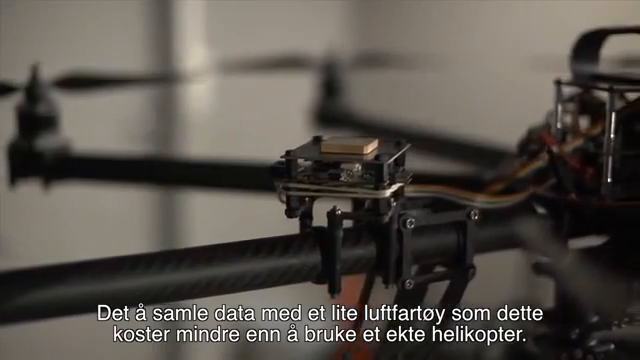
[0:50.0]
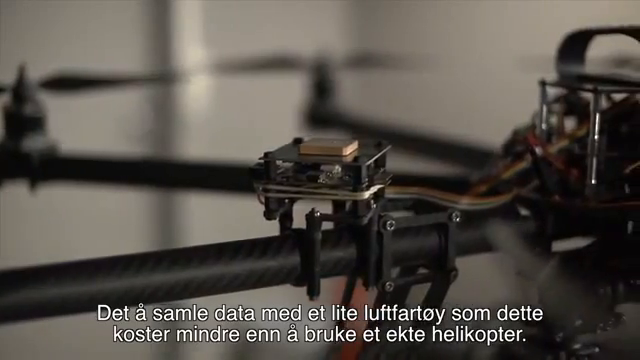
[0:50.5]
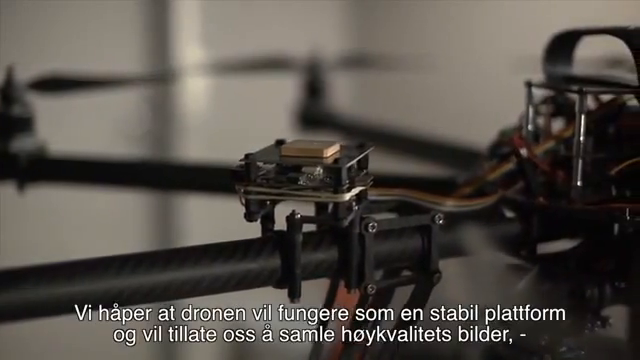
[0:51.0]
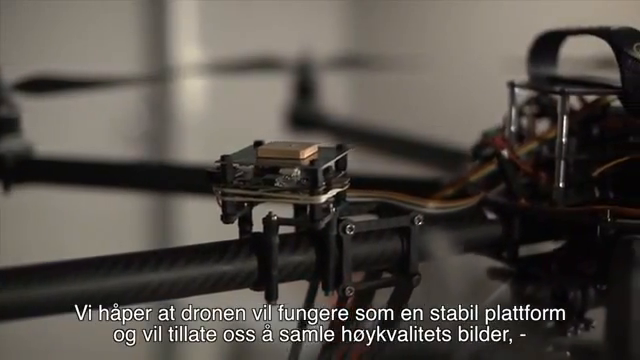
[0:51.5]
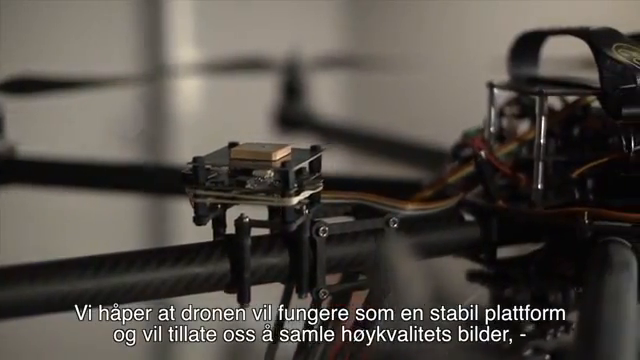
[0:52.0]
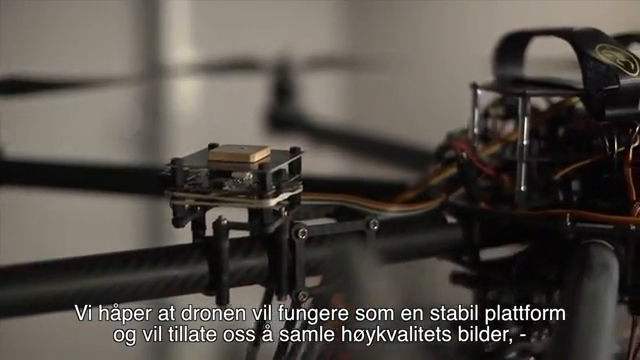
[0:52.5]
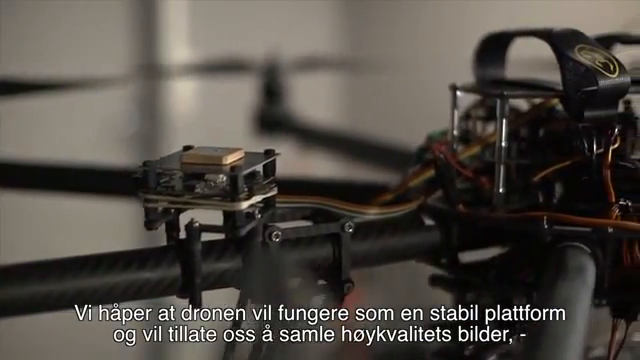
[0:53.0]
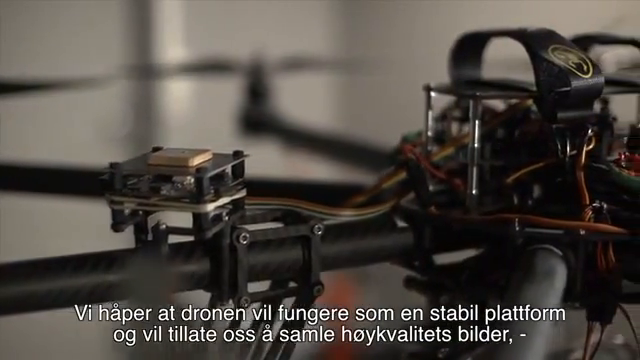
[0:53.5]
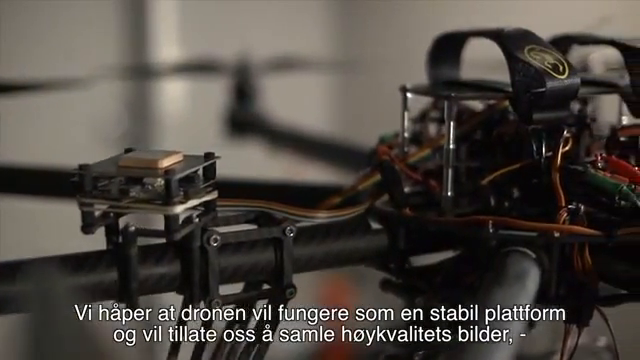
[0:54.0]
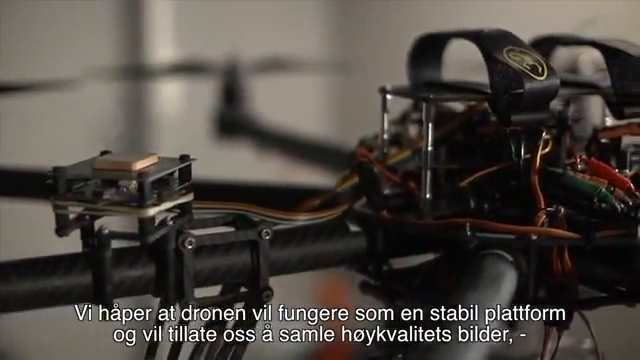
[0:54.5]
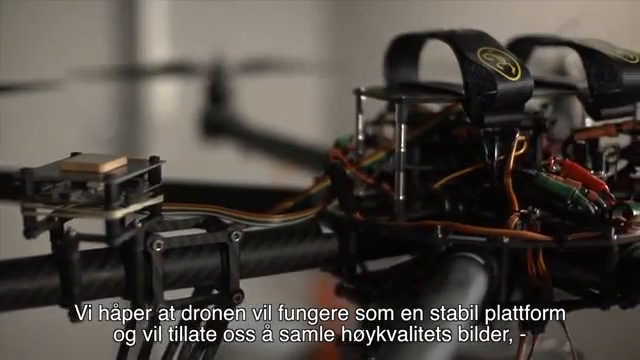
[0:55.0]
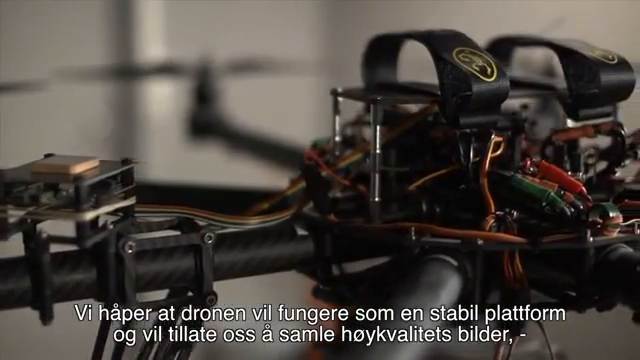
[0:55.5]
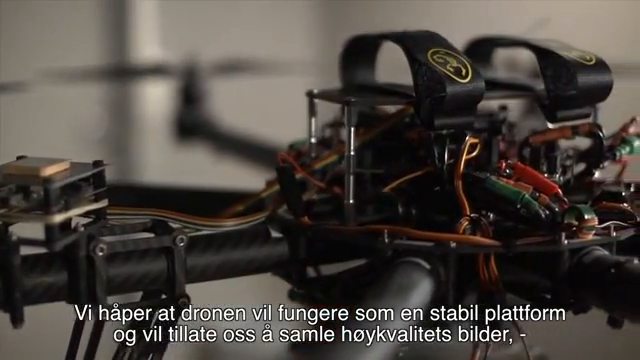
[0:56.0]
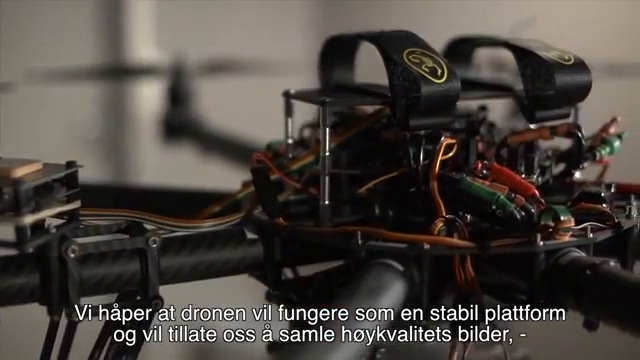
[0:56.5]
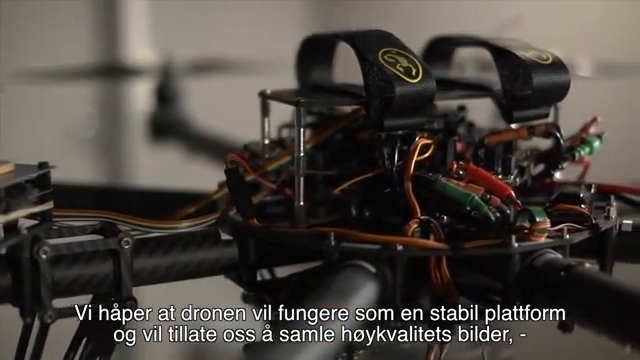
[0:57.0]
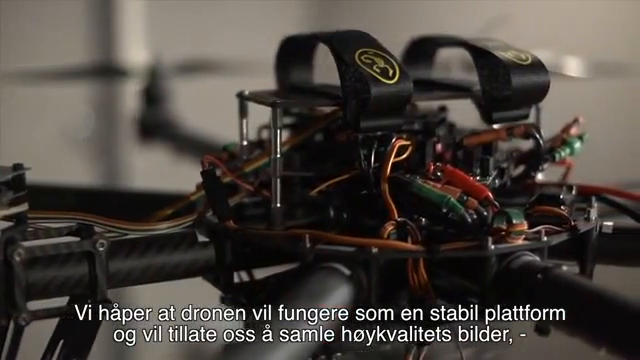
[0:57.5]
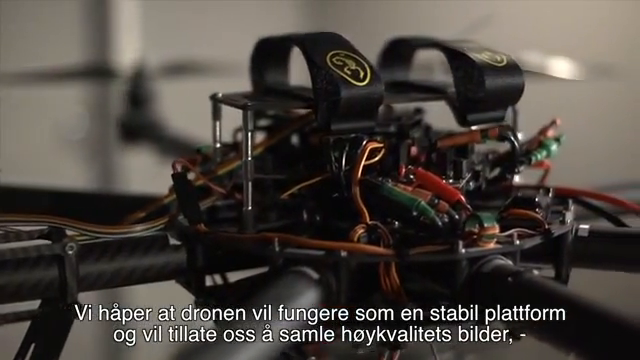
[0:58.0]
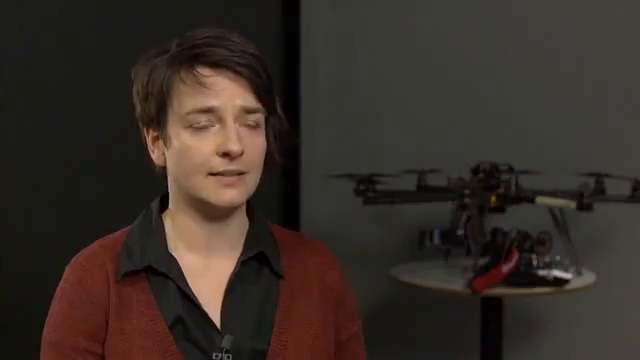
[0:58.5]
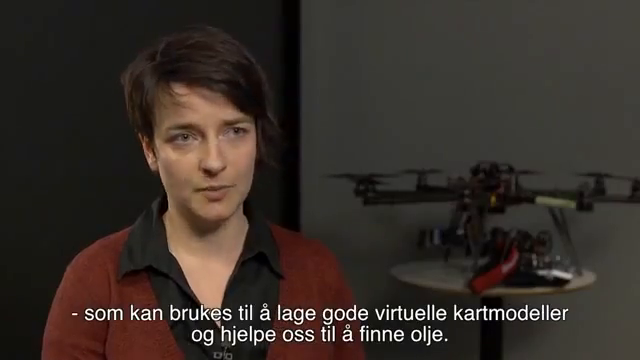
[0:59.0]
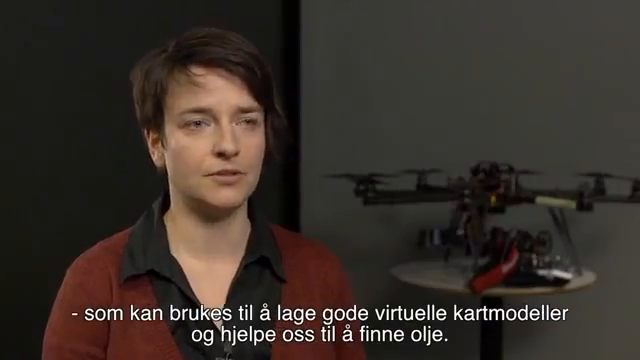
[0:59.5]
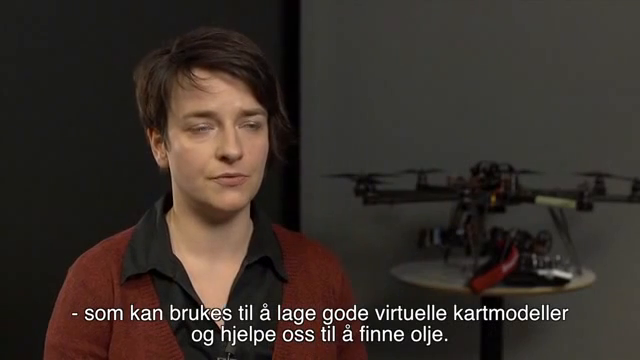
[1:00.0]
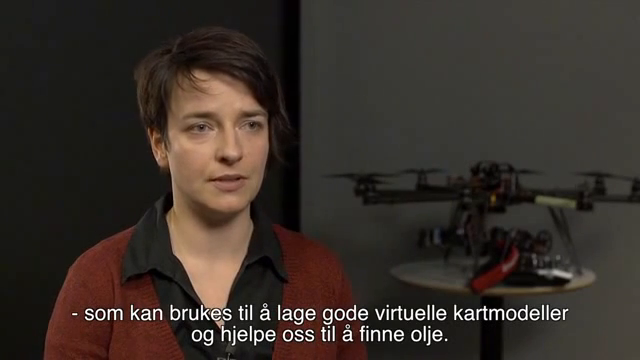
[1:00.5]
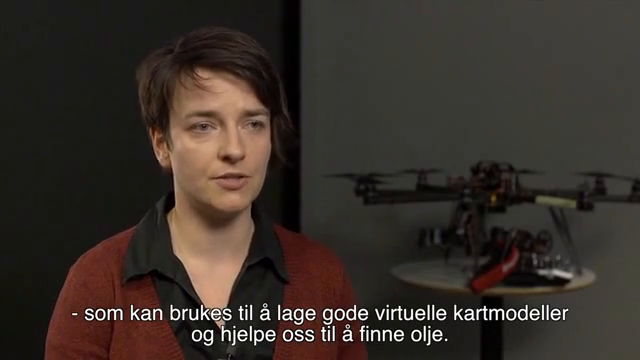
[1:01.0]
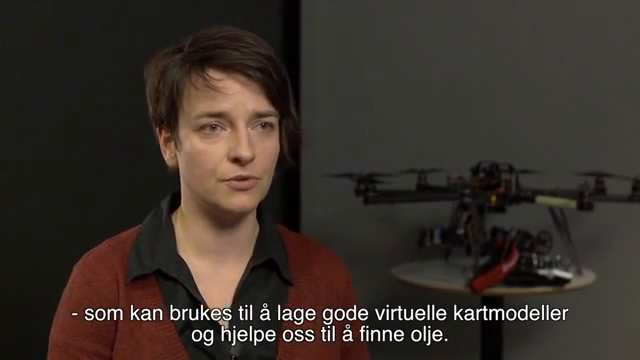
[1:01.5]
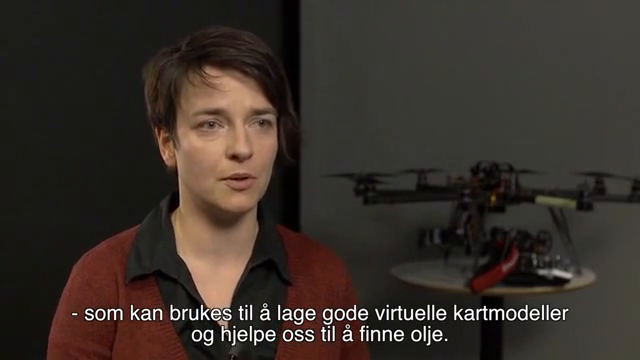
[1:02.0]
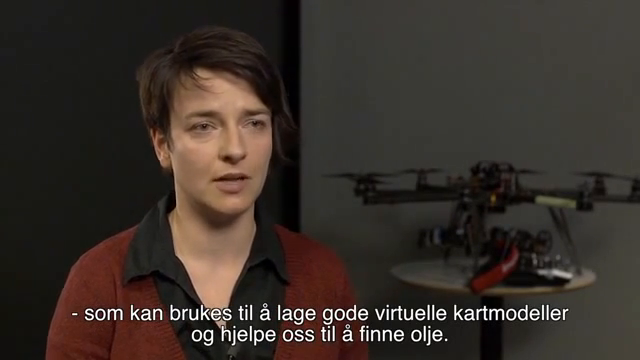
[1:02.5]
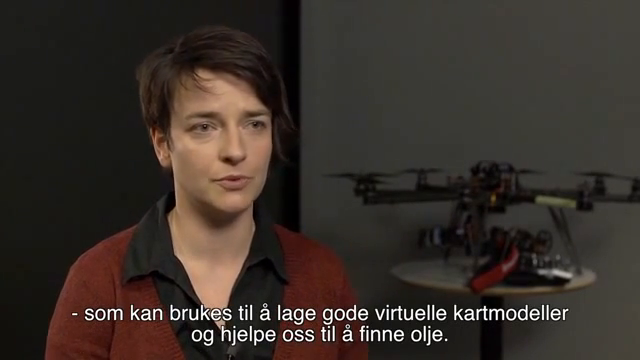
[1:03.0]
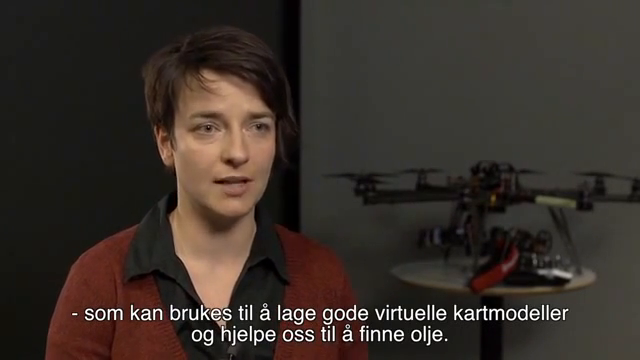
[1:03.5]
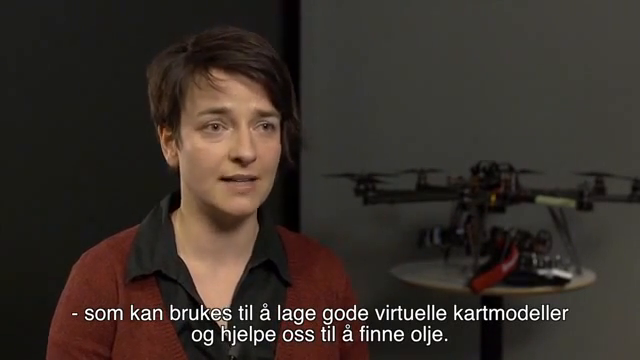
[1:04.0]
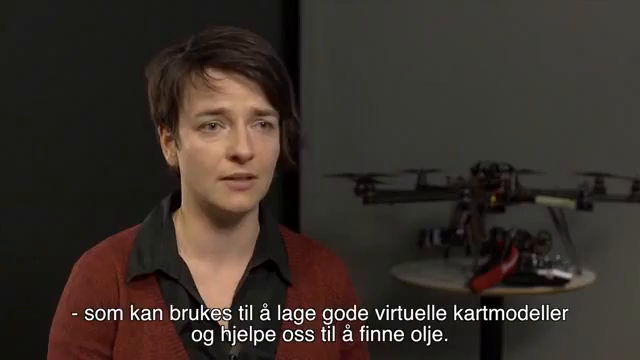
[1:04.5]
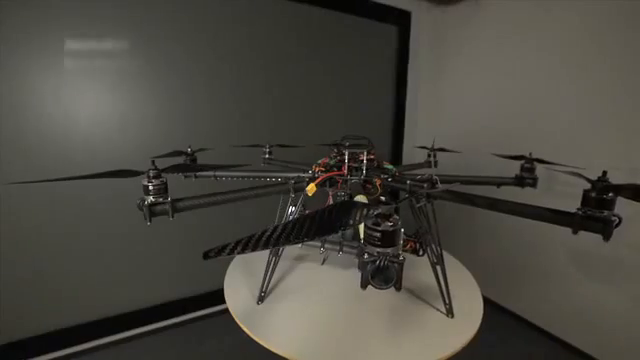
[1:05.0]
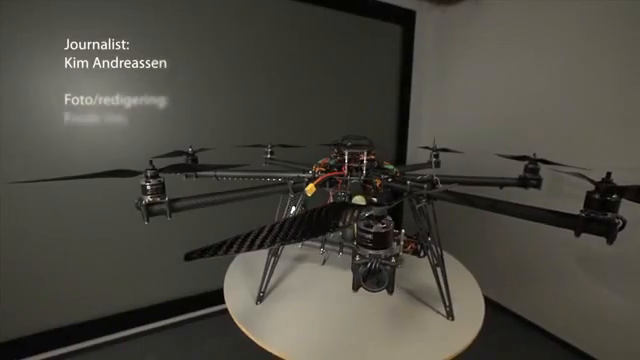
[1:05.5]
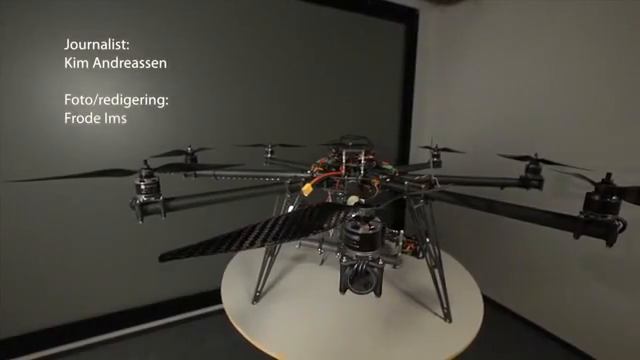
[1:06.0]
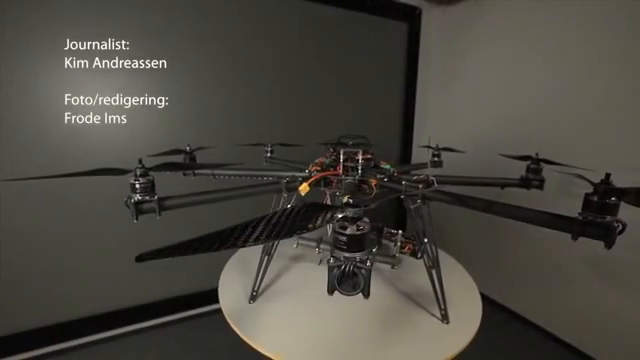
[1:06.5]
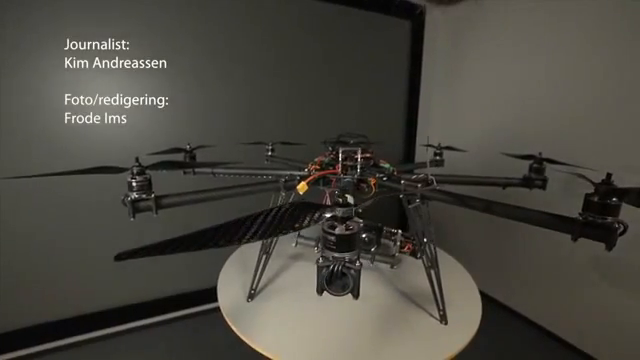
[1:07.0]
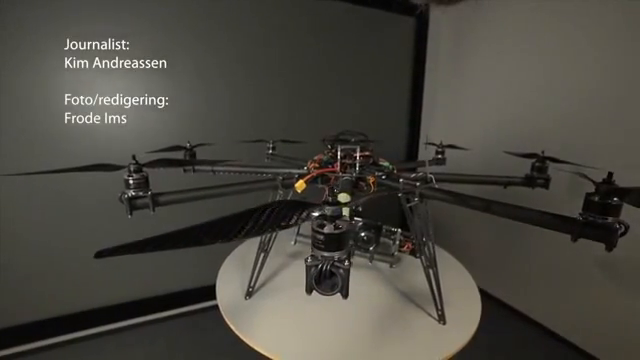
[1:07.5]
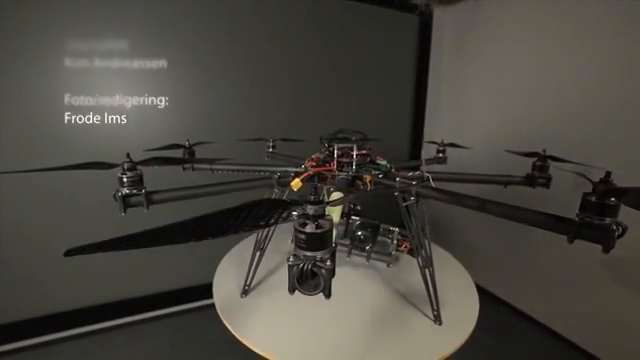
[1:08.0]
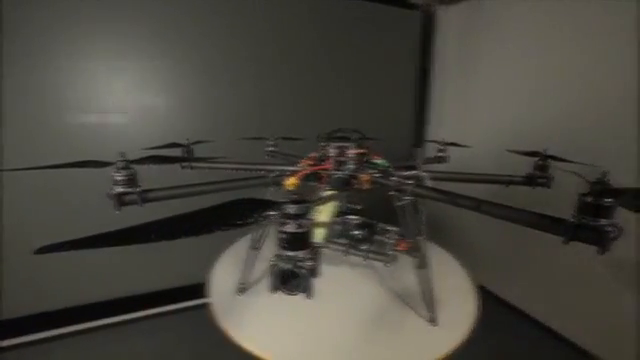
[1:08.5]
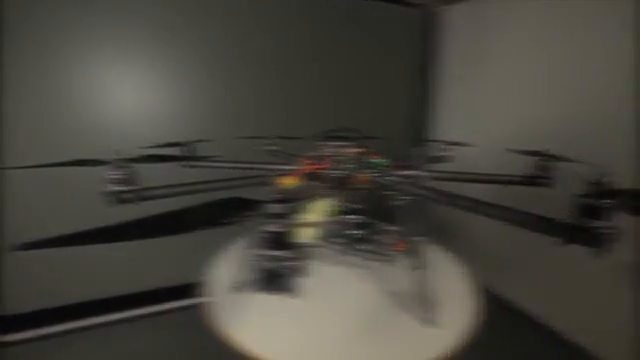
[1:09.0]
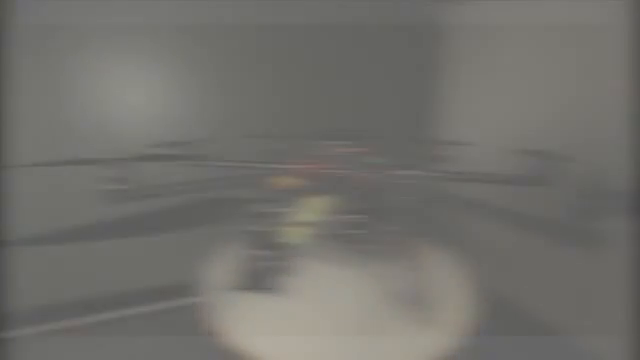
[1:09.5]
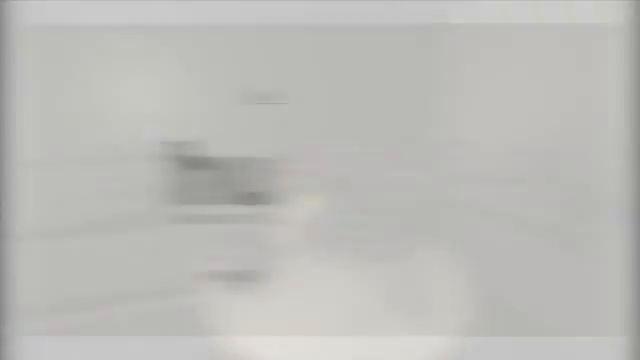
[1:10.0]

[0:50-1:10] The drone helicopter is shown again in a side-sweeping motion, in a close, zoomed-in shot of one of the blades and the arm of the blade. The camera moves down the arm to show the center of the drone helicopter and its wiring, a shot seen earlier, revealing the red, green and orange wires of the center part of the drone. The setting then changes to the man again, who is being interviewed, and the text comes up on the screen again. The drone helicopter, sitting on a table, is in the background as he is interviewed. The man is just sitting there talking, presumably about the drone. The drone and the man are the two main subjects of the video.